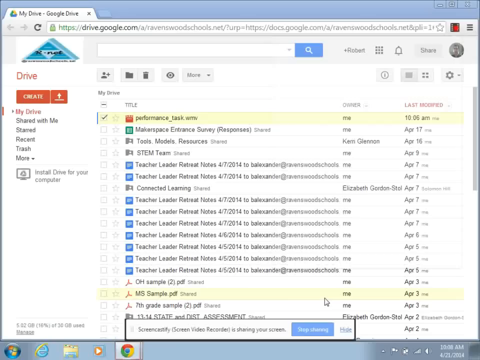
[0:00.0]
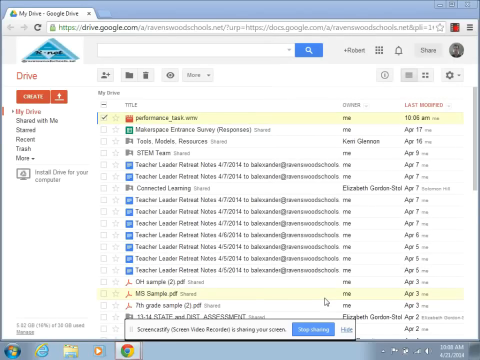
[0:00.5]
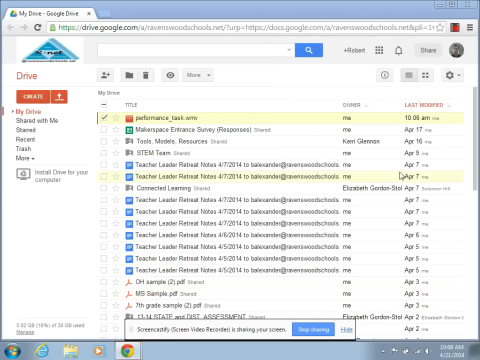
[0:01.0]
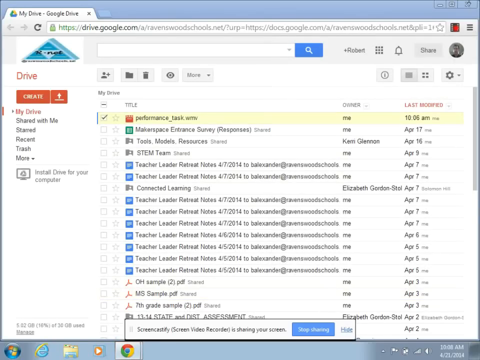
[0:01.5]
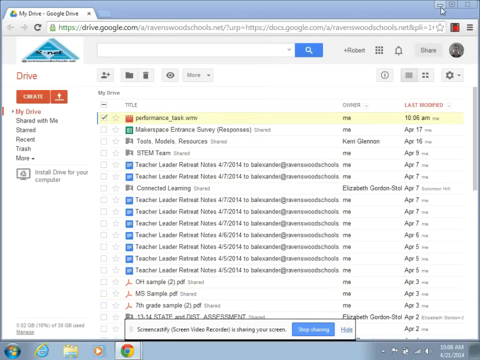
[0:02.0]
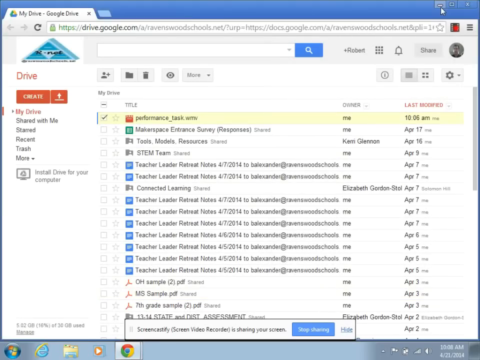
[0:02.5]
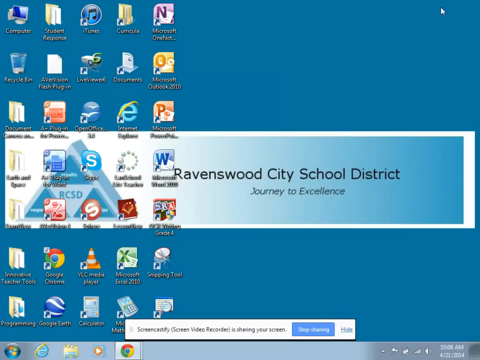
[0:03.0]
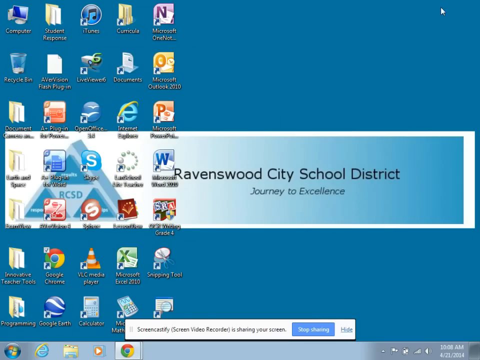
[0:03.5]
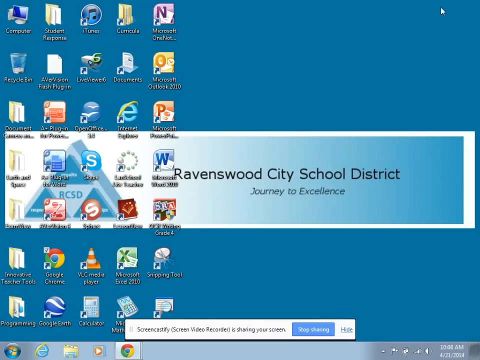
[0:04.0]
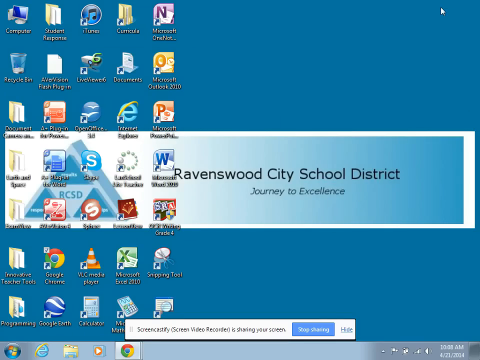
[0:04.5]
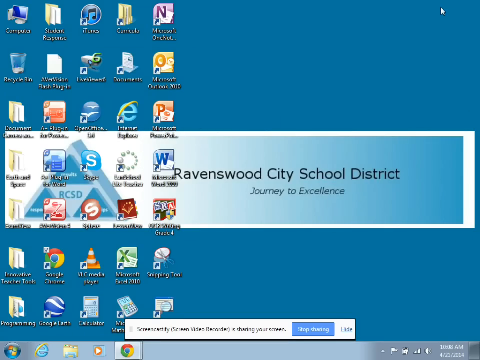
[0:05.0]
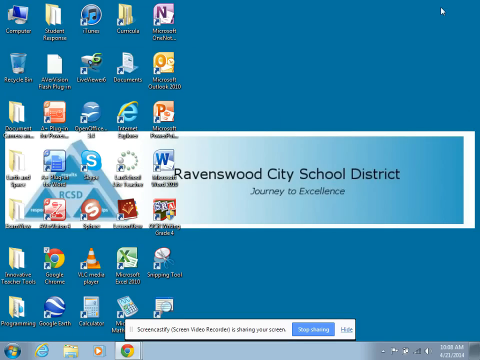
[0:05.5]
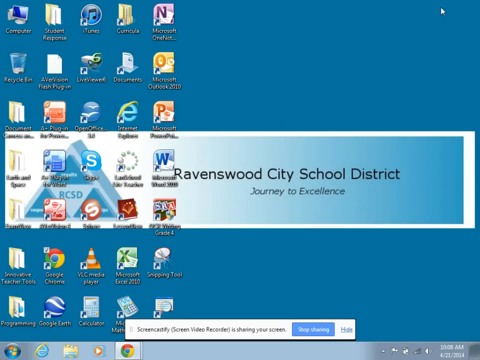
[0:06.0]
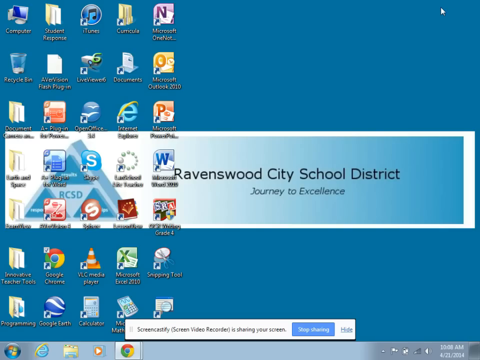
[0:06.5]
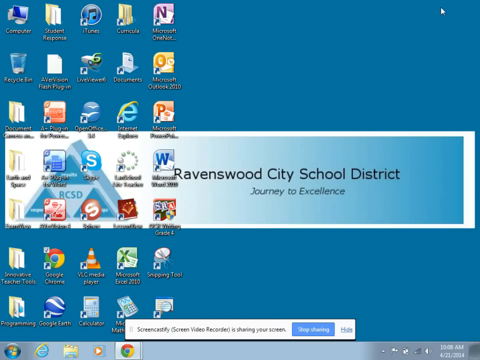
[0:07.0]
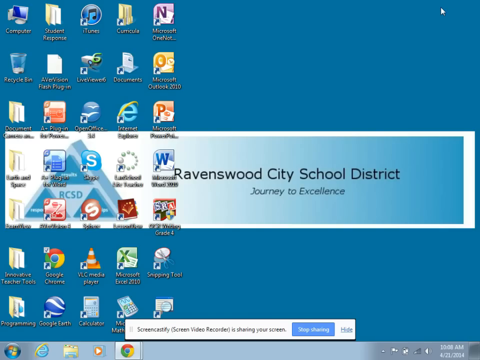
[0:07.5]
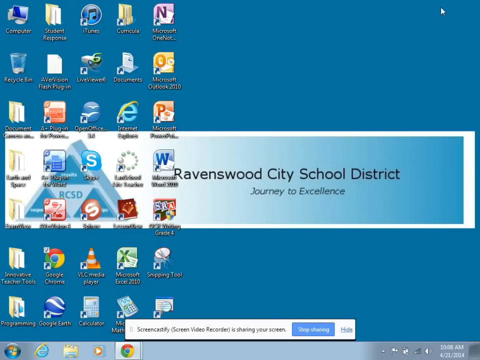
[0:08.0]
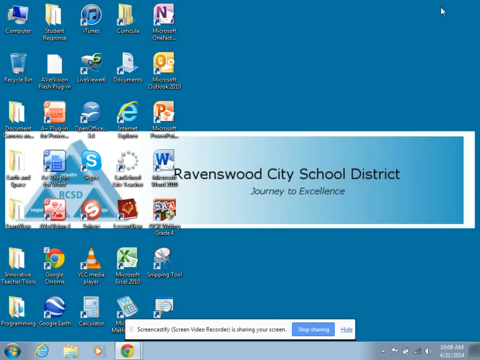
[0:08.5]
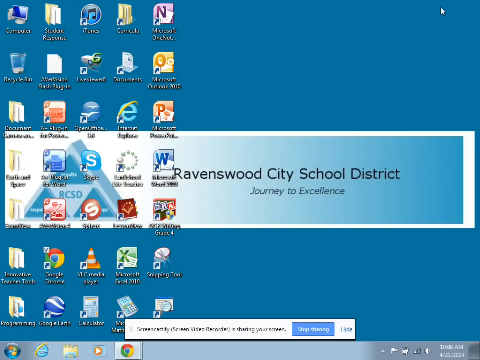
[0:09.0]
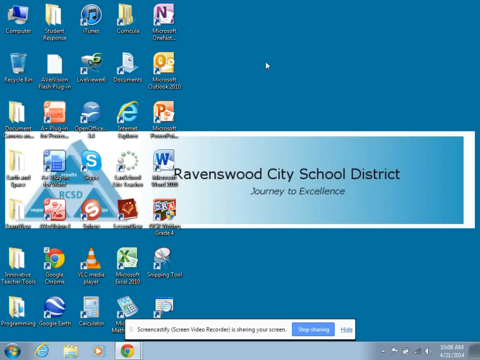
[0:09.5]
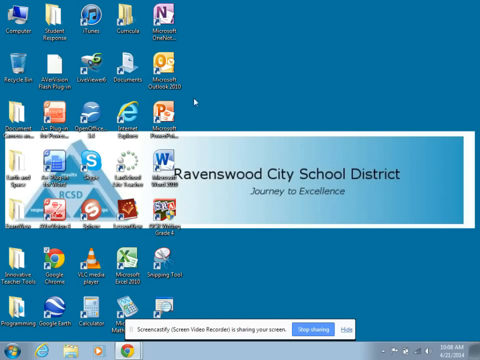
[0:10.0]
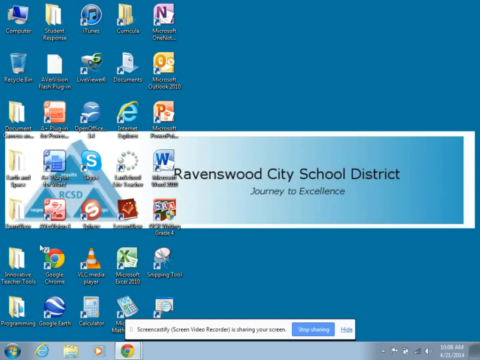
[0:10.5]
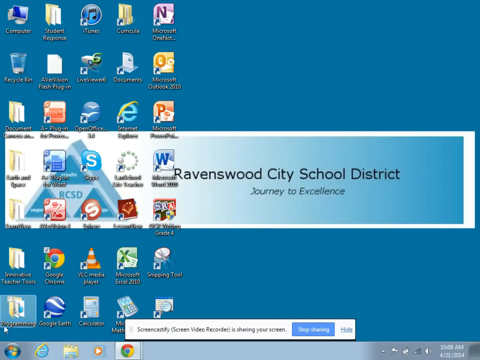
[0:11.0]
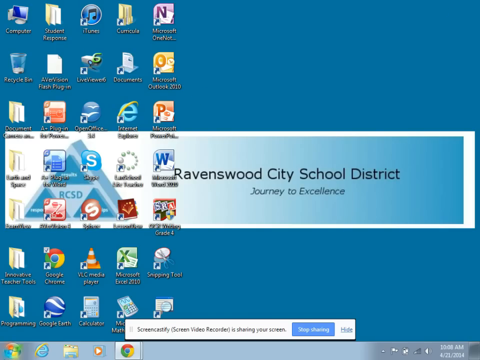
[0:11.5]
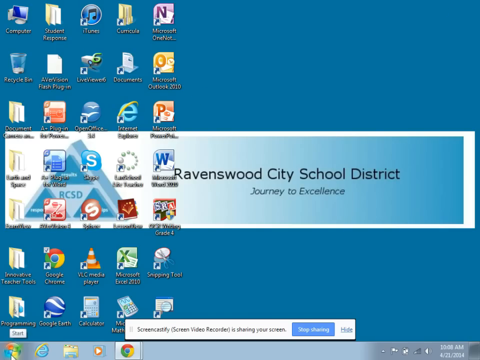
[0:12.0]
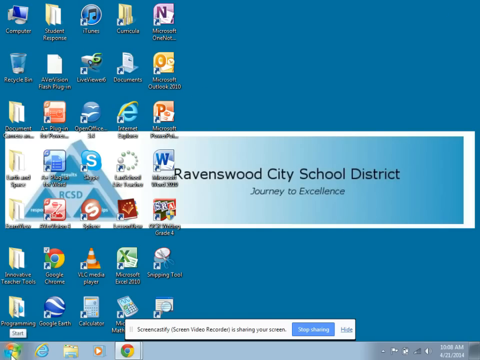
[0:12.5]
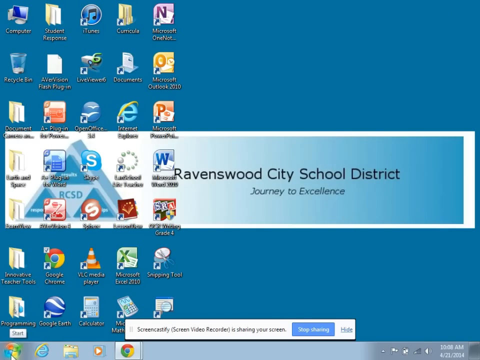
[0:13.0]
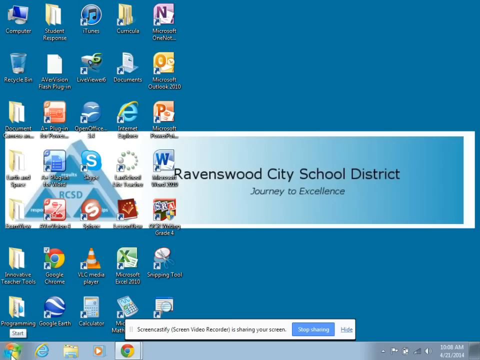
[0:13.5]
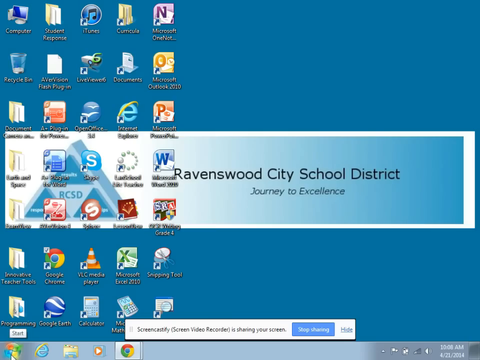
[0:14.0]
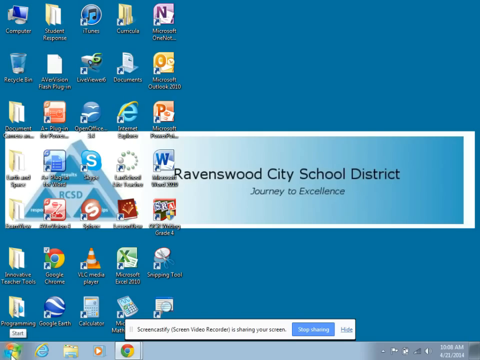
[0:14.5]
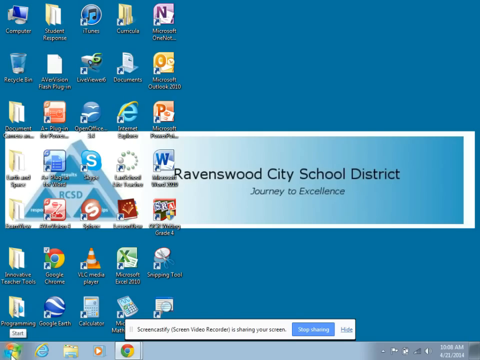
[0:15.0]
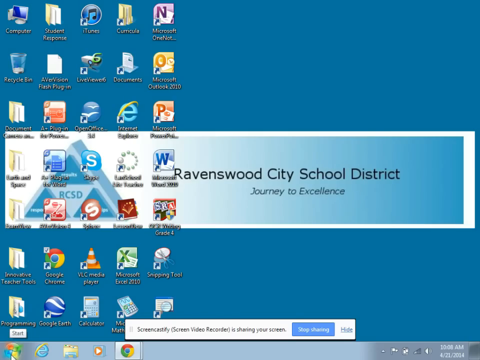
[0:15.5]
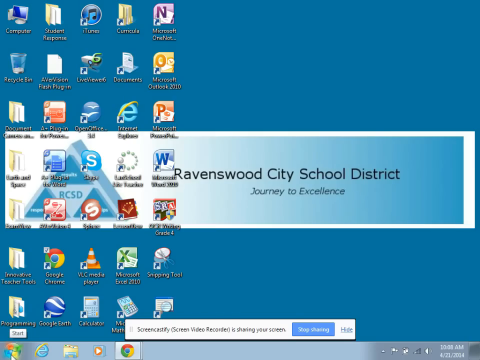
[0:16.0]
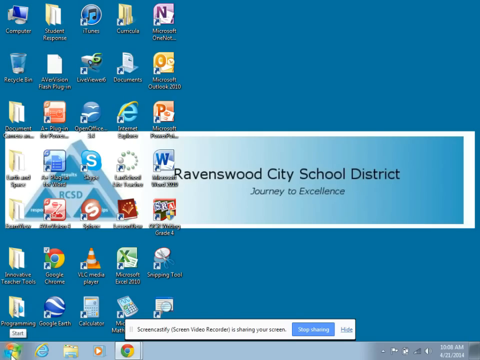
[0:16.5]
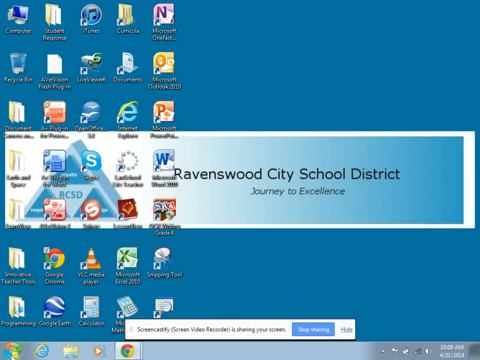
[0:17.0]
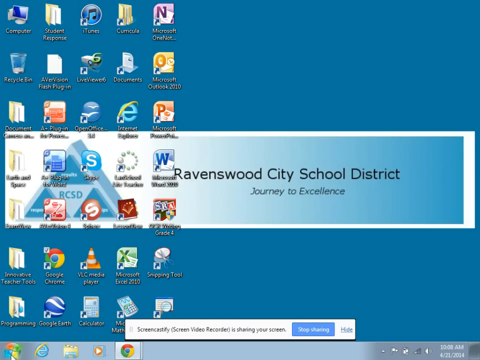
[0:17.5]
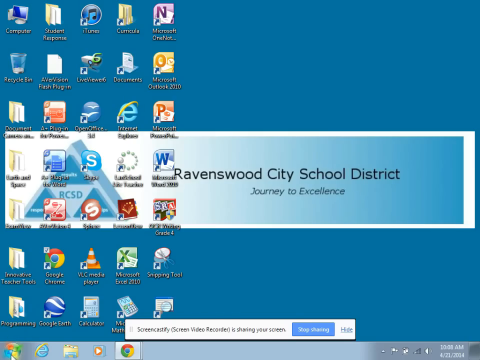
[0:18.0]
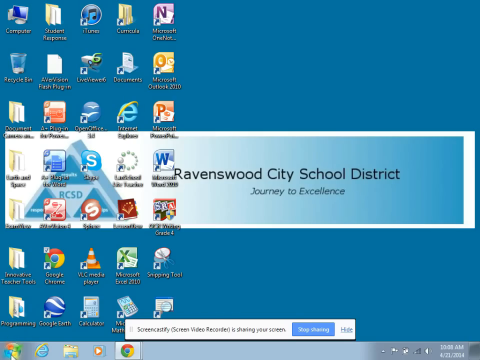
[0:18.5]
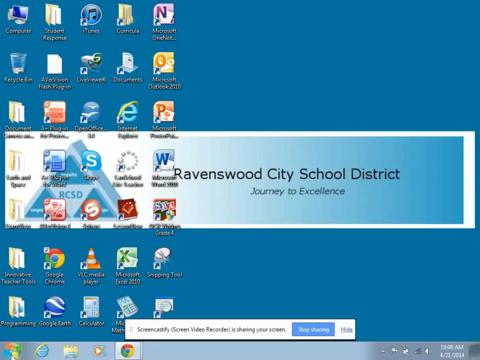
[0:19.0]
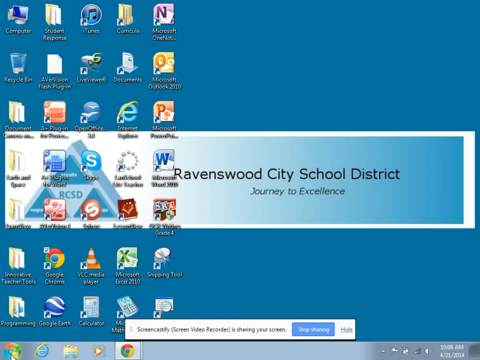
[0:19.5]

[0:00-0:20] A Google Drive home screen is open on a desktop, viewed first-hand. The view then goes to the home page, and in the background "Ravenswood City School District", "Journey to Excellence" and a few applications are visible. The screen is being shared. There are no captions explaining what is happening; the person simply moves their cursor around the screen.